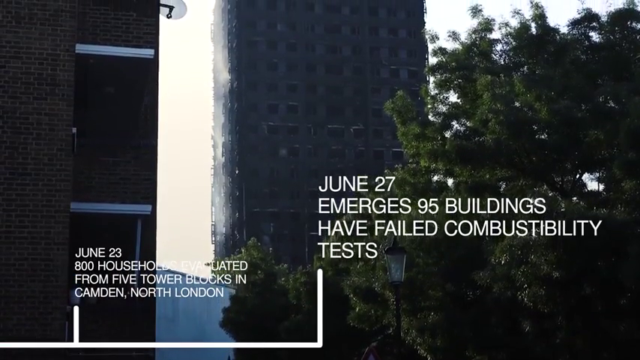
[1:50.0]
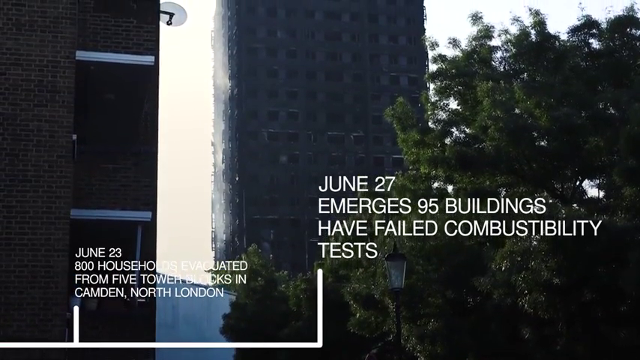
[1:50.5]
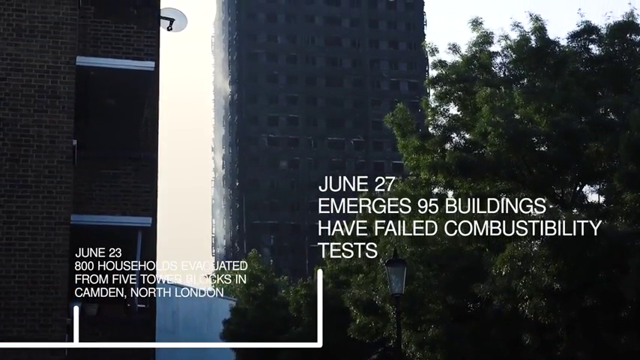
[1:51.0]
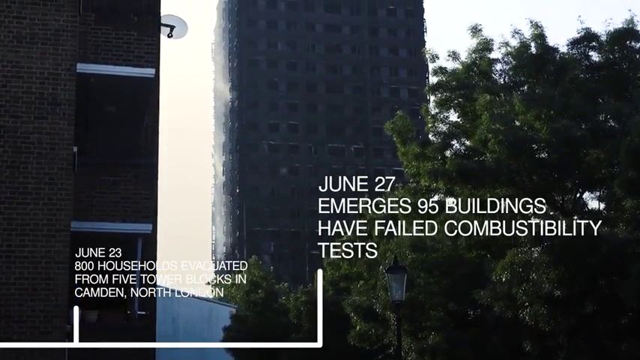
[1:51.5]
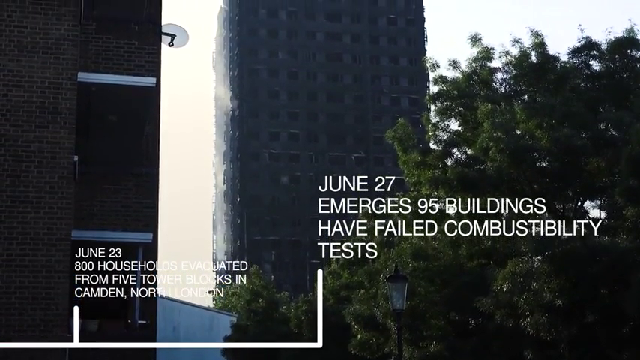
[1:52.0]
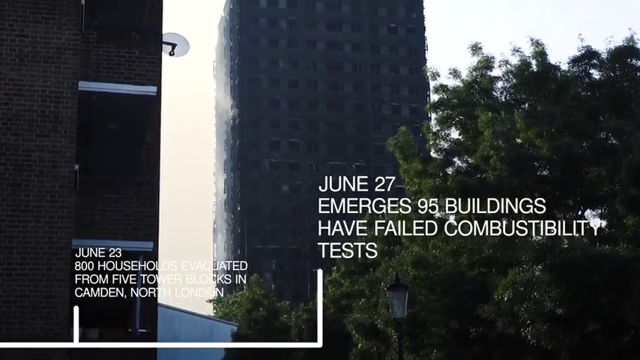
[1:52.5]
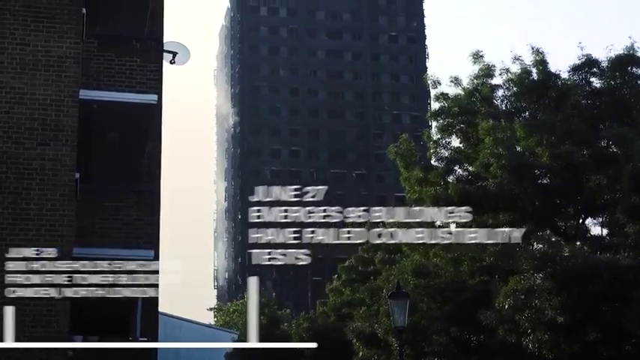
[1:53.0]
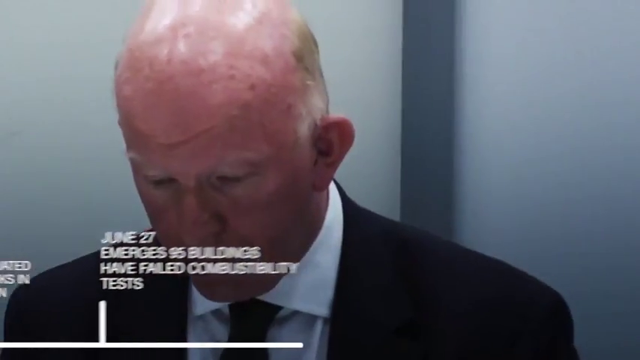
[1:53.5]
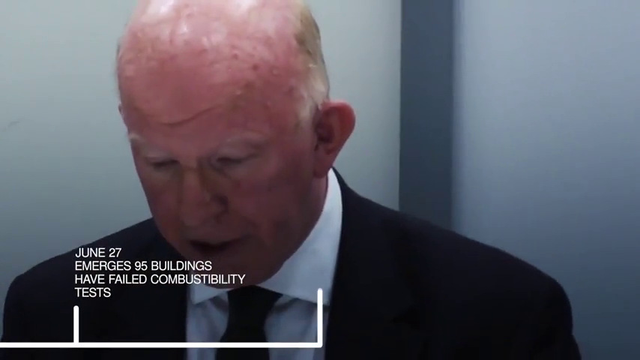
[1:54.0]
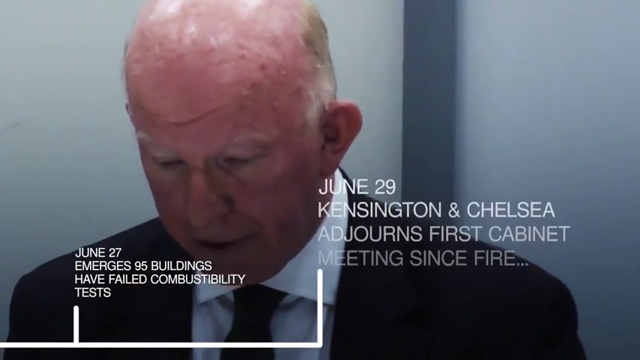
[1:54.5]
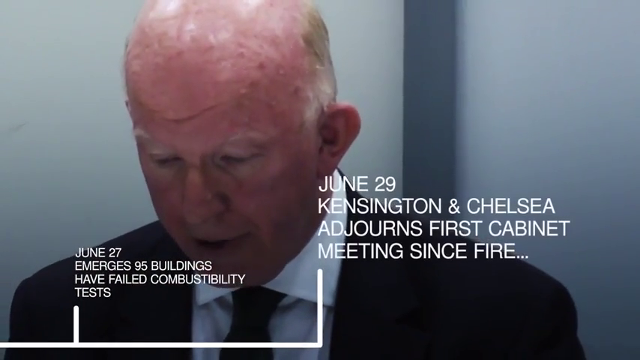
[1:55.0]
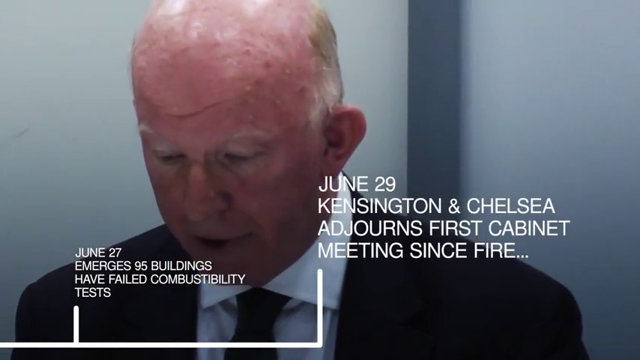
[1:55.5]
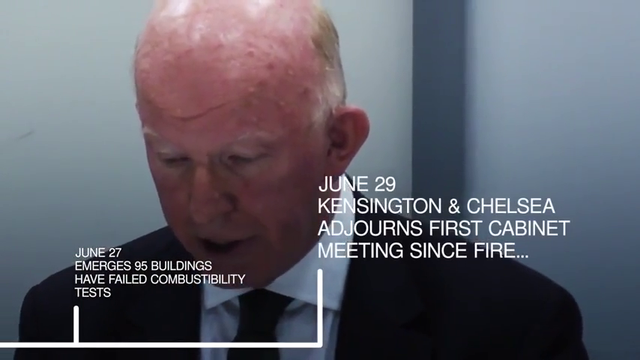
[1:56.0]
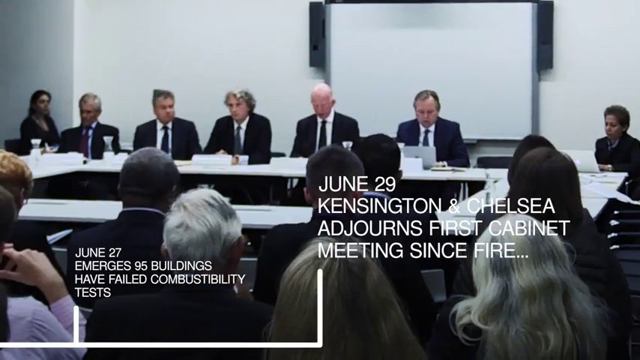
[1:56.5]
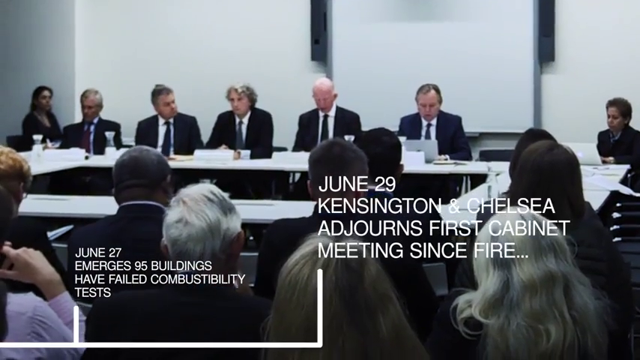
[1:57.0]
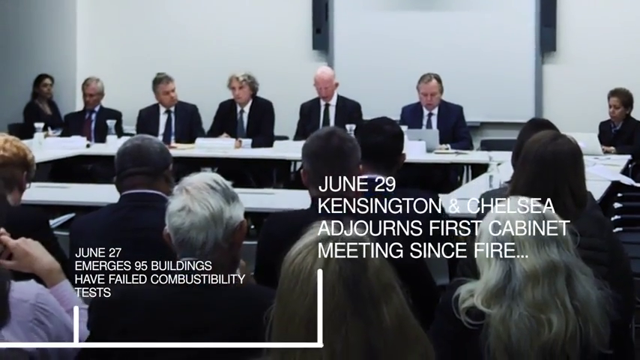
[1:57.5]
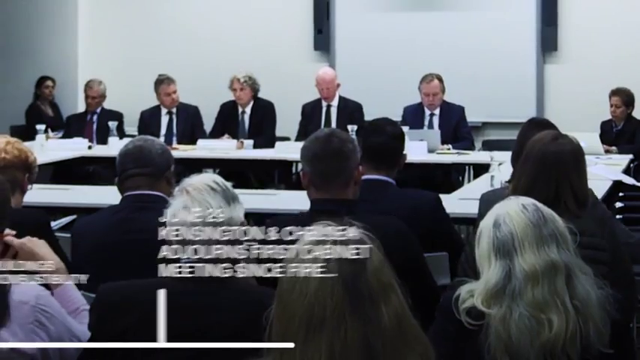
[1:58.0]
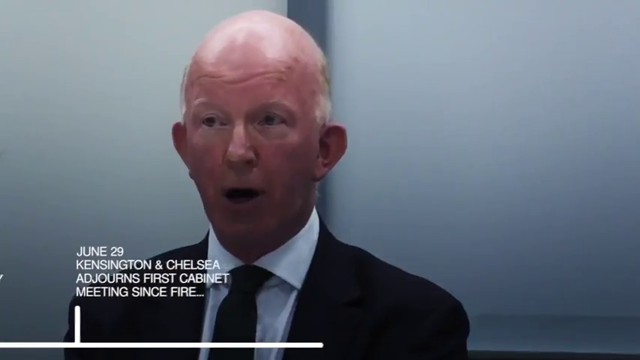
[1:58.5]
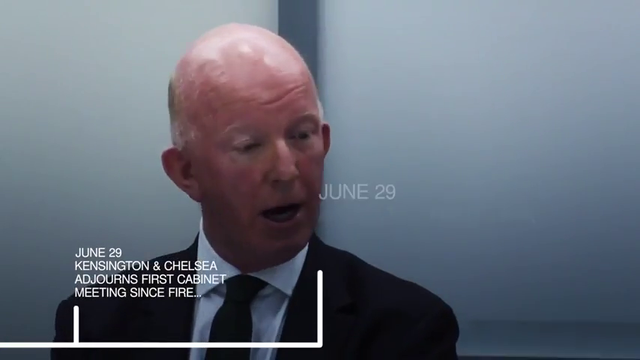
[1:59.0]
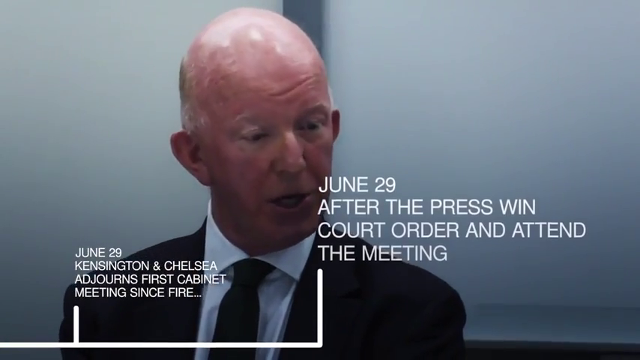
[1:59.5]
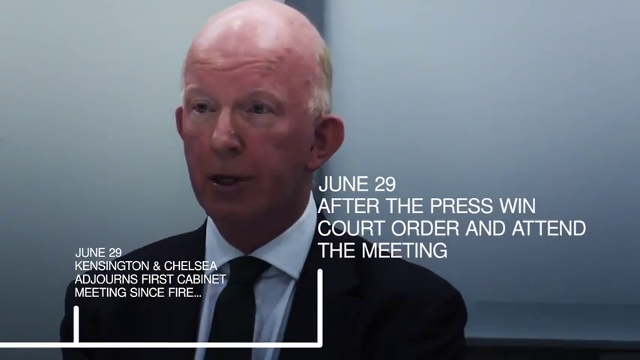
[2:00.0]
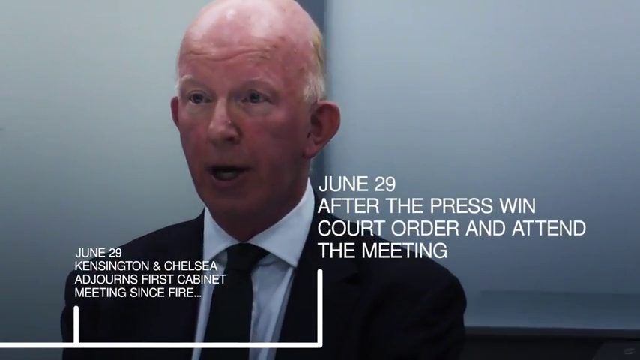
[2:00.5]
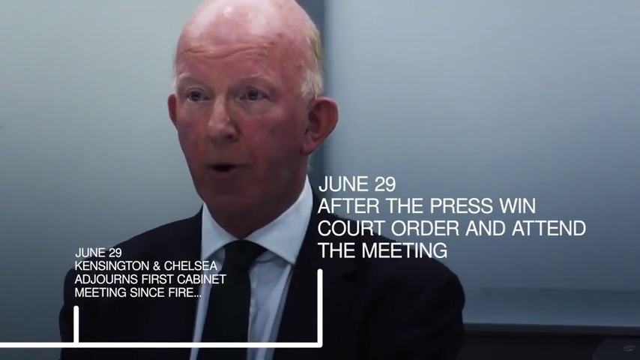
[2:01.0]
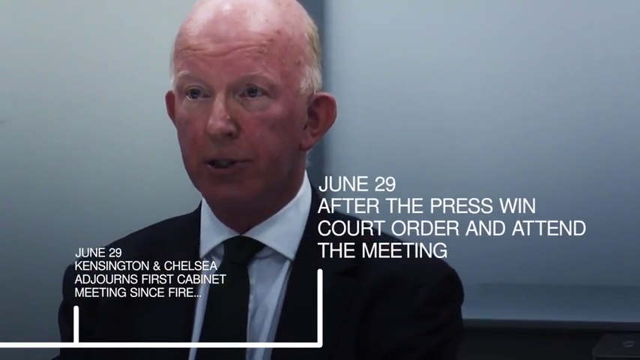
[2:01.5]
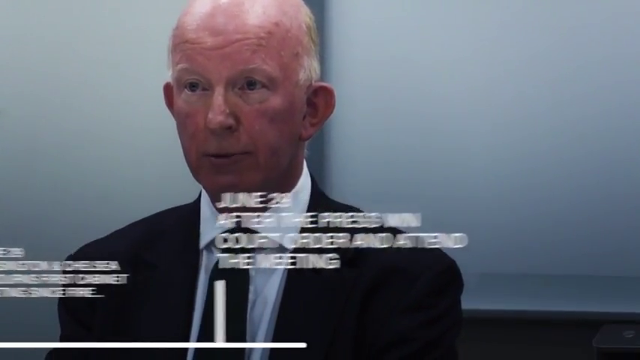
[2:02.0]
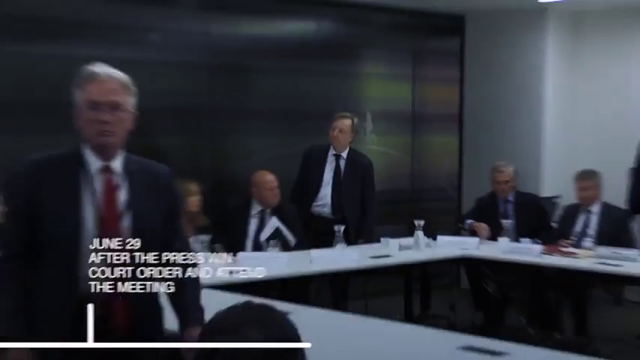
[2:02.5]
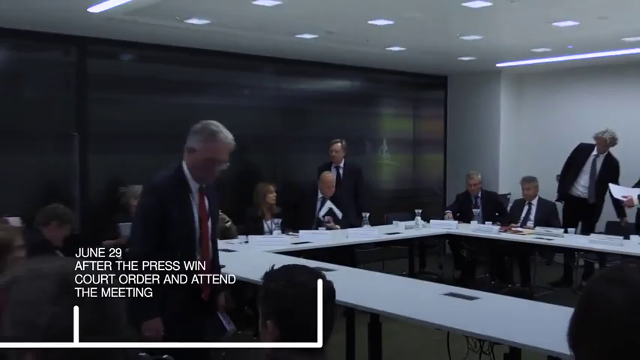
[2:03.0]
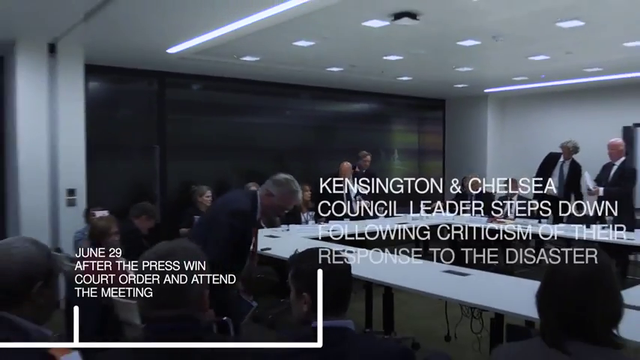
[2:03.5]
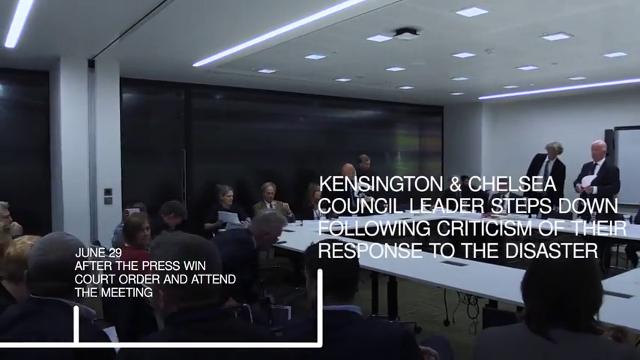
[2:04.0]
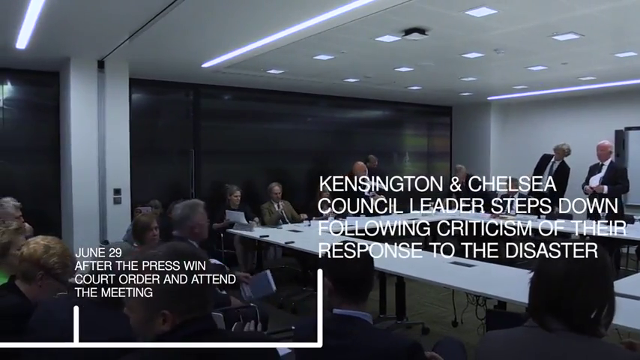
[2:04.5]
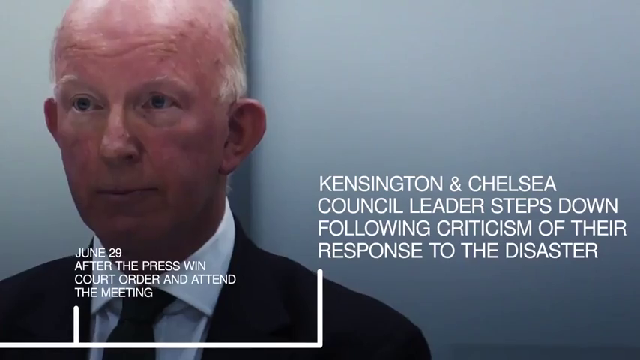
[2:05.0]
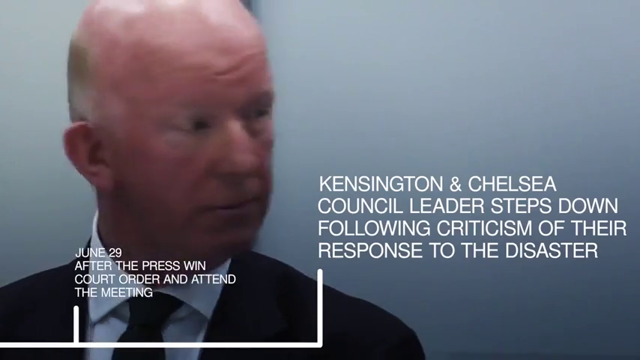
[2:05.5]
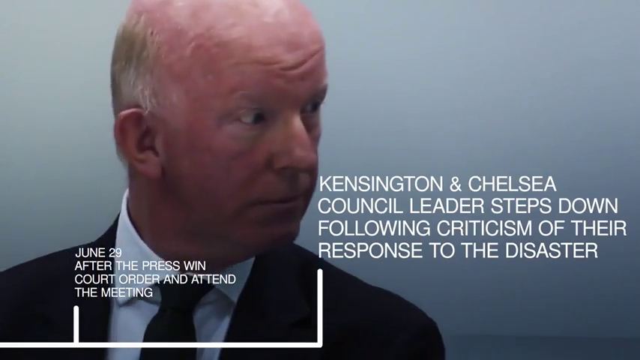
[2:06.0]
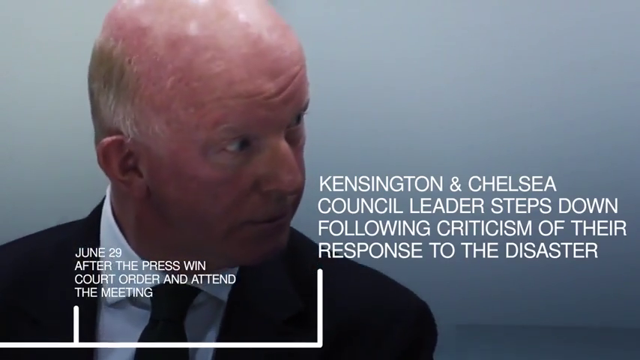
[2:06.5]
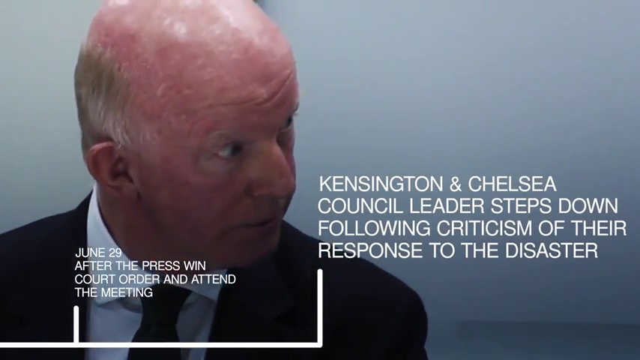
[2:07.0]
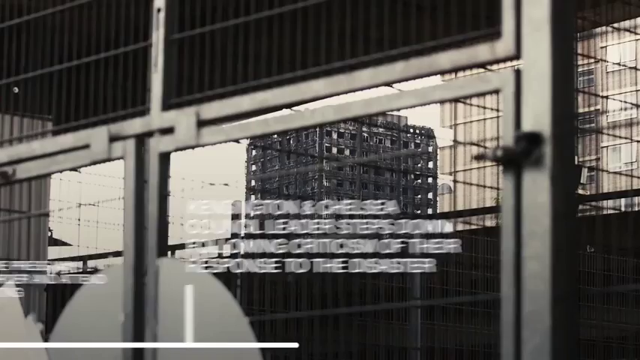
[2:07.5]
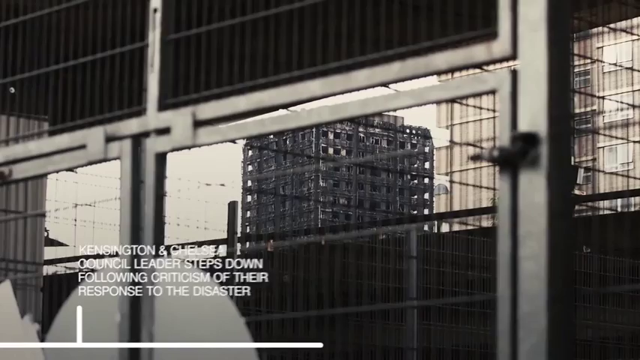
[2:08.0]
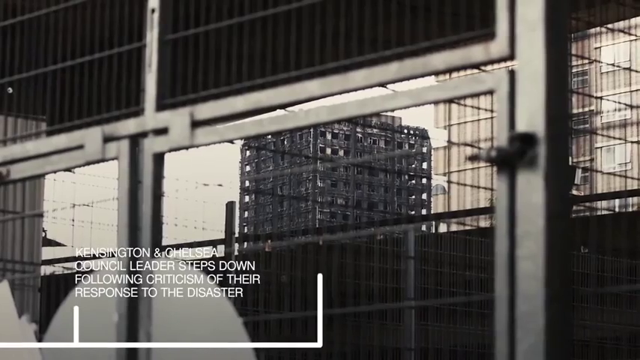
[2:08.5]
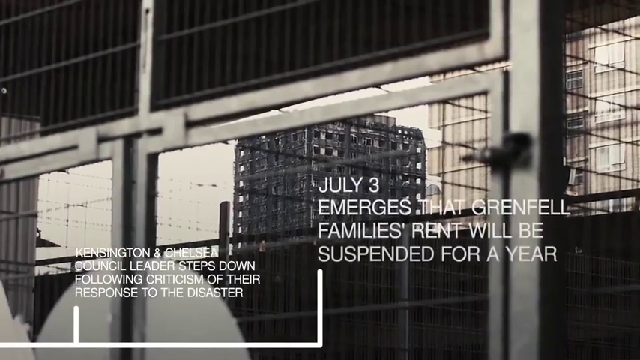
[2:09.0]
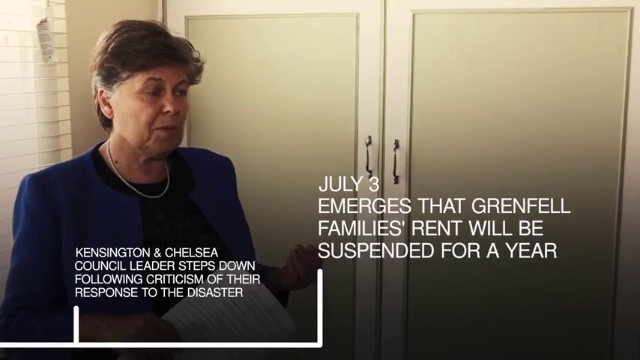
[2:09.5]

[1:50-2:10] At a building, an old bald man with spots on his head, wearing a suit, appears. The text at the center moves down to the left, and new text at the center reads "June 29th" and "meeting since fire." An image in the background shows a bunch of people in suits and some kind of whiteboard. The text at the center goes down to the left as small text, and a bald man in a suit is at the center. Text reads "June 29th" and "ordered an end to the meeting," and someone is speaking. The text at the center goes down to the left as small text. In an office room, someone is sitting at the center; the camera zooms out and people are standing. The video returns to a close-up of the old man, and text at the center reads "Kensington and Chelsea Council leader steps down." The person in the background now looks to the right, staring, at a kind of angle. The text at the center moves down to the left and shrinks, a line at the bottom moves down, and text reads "July 3rd" about Grenfell, with rent "will be suspended for a year." A woman is now visible, speaking and extending her hand out as she speaks.